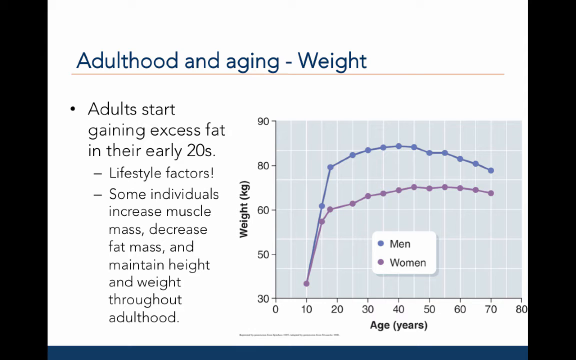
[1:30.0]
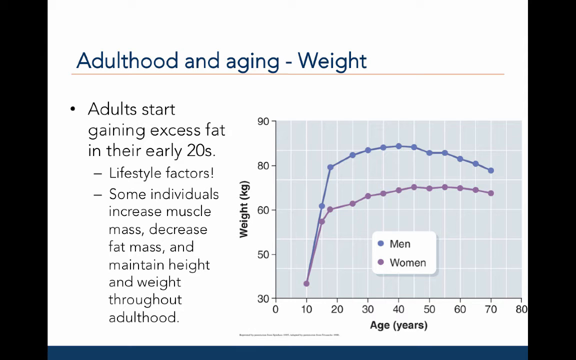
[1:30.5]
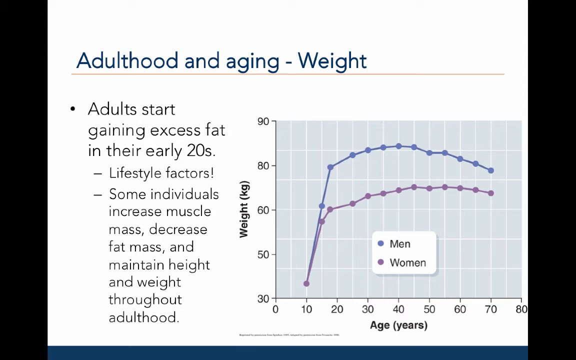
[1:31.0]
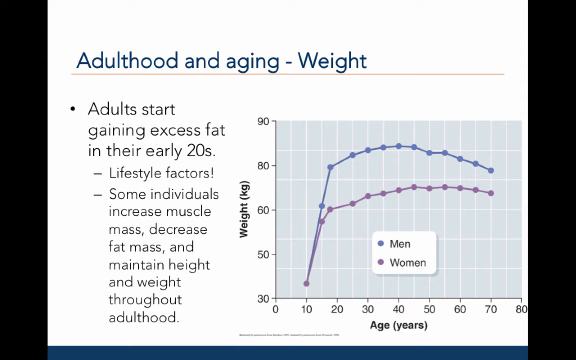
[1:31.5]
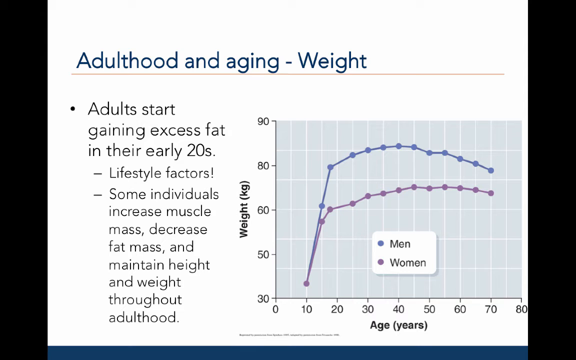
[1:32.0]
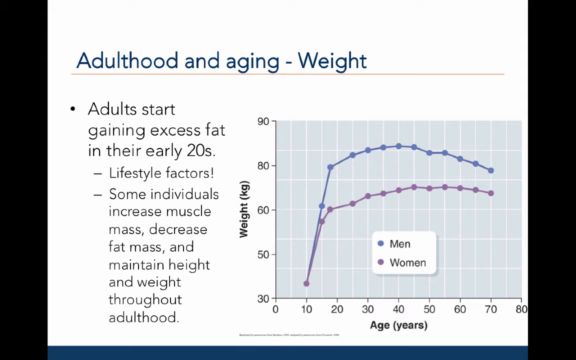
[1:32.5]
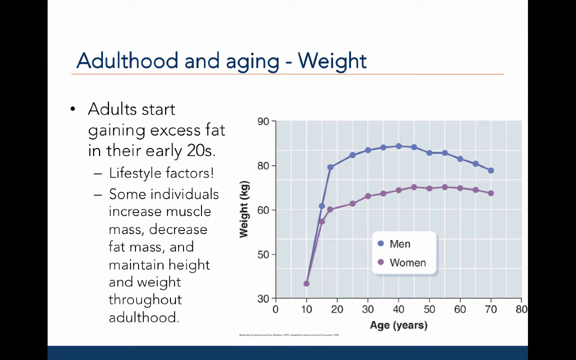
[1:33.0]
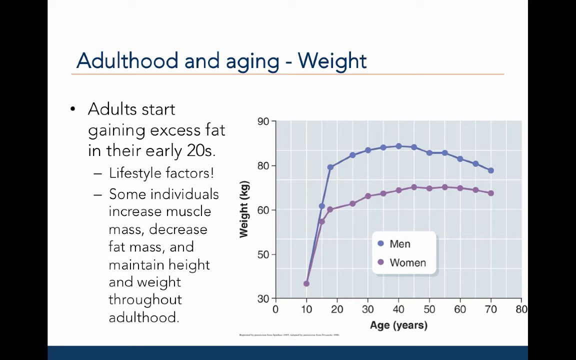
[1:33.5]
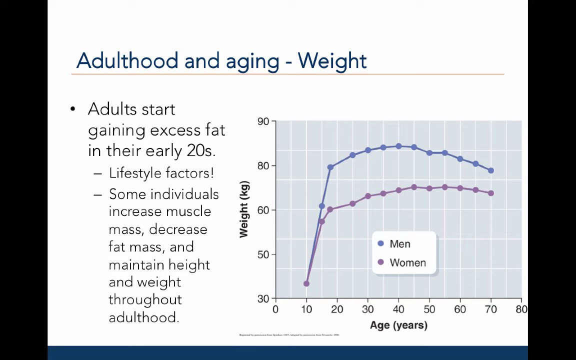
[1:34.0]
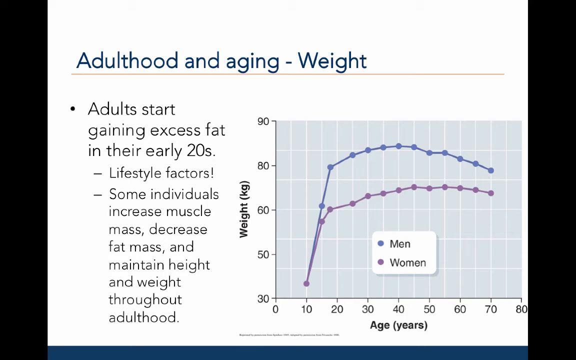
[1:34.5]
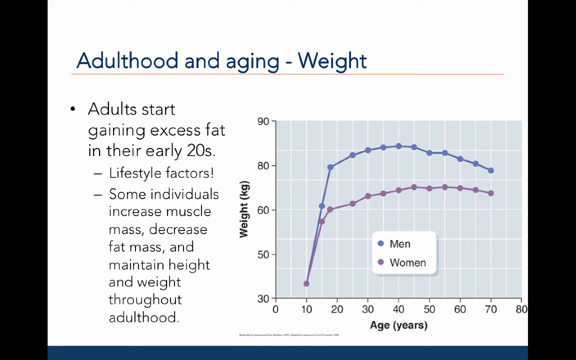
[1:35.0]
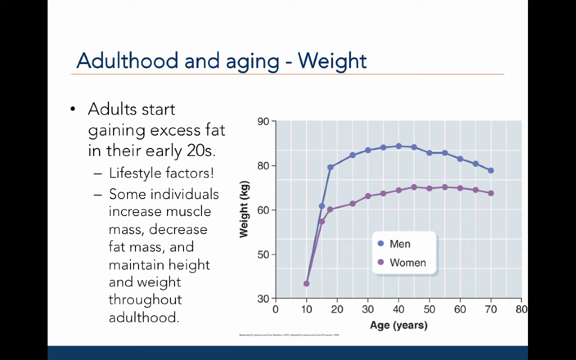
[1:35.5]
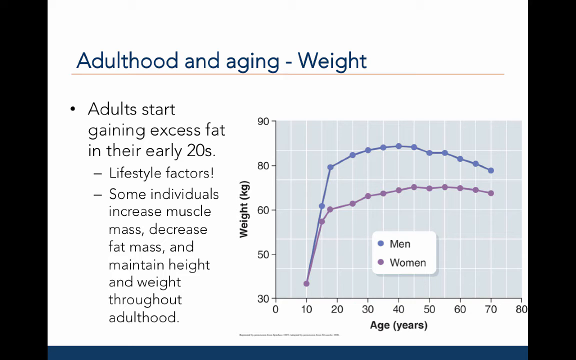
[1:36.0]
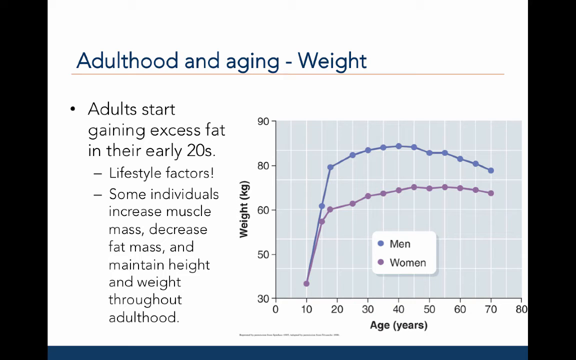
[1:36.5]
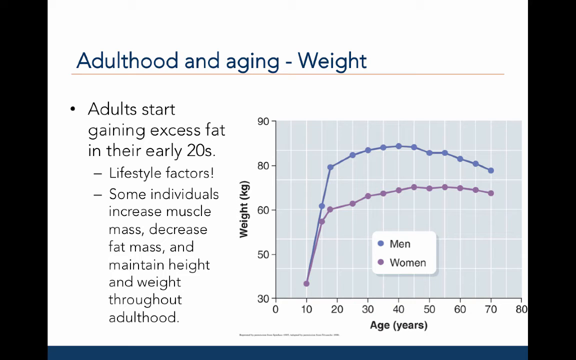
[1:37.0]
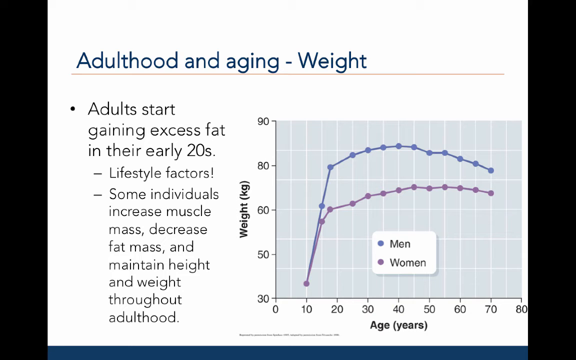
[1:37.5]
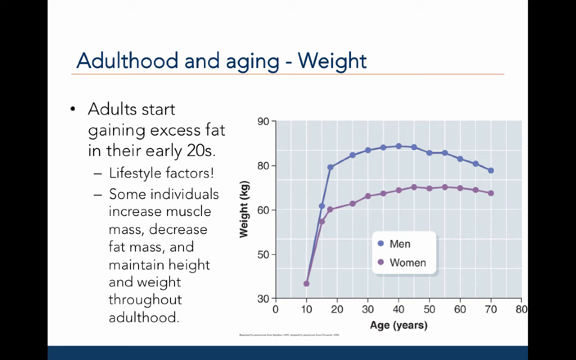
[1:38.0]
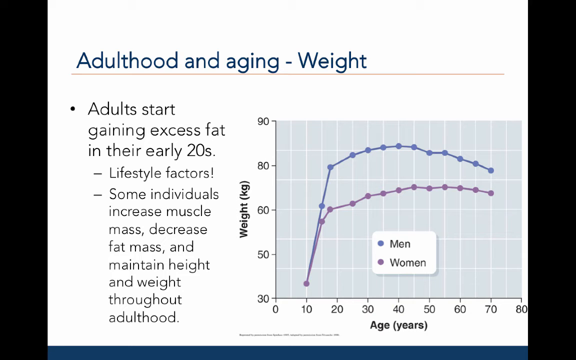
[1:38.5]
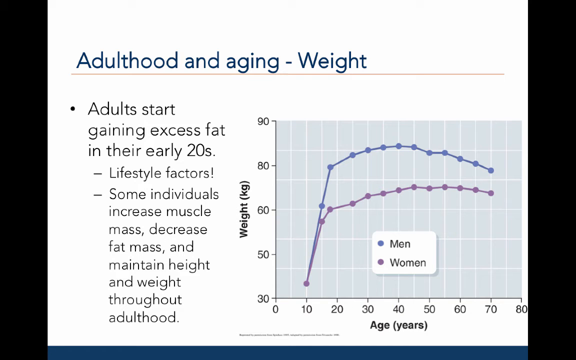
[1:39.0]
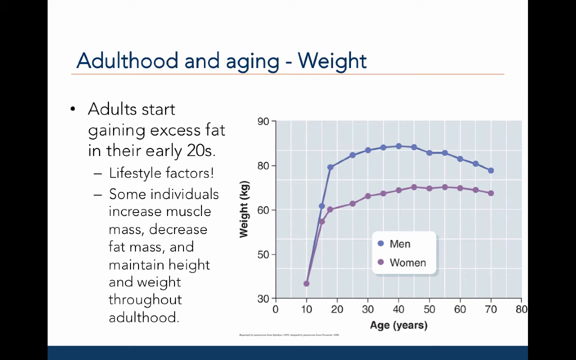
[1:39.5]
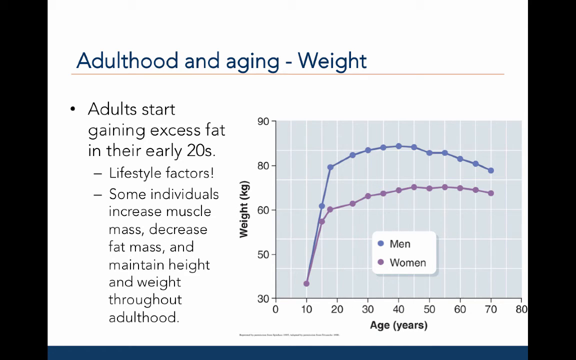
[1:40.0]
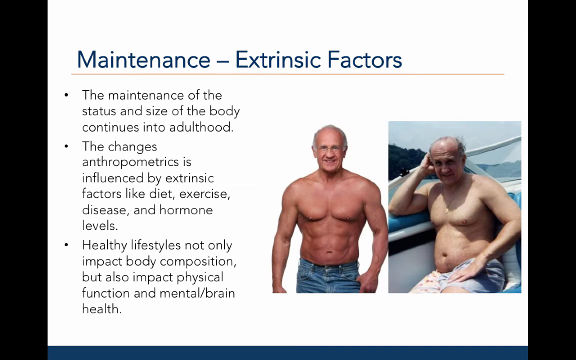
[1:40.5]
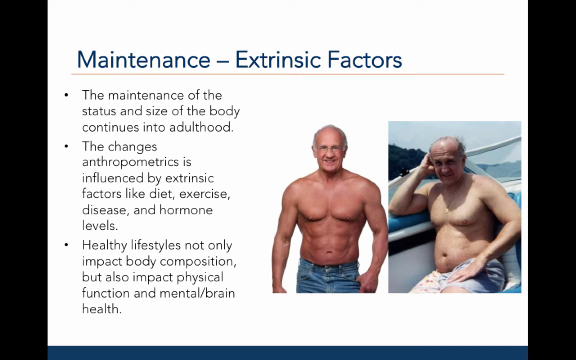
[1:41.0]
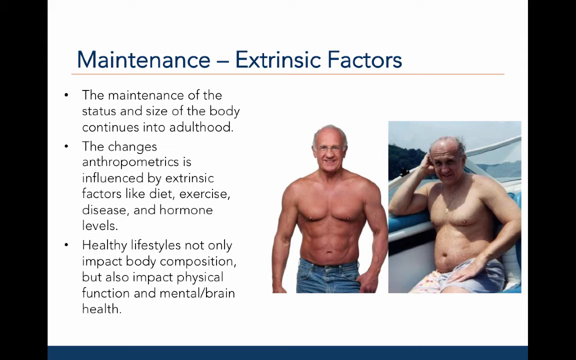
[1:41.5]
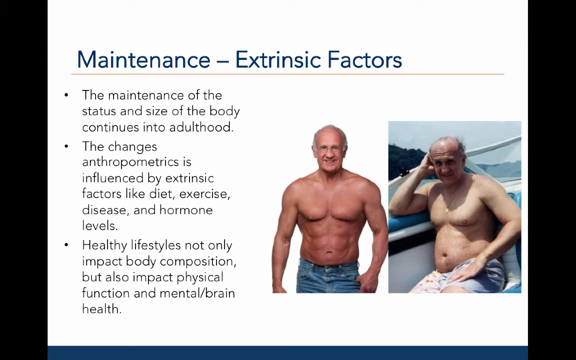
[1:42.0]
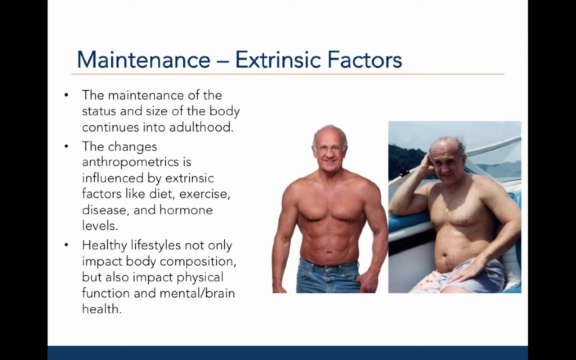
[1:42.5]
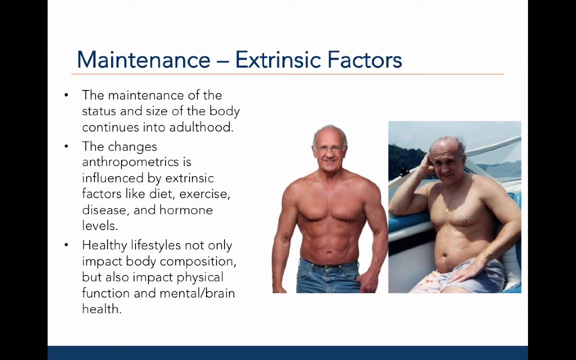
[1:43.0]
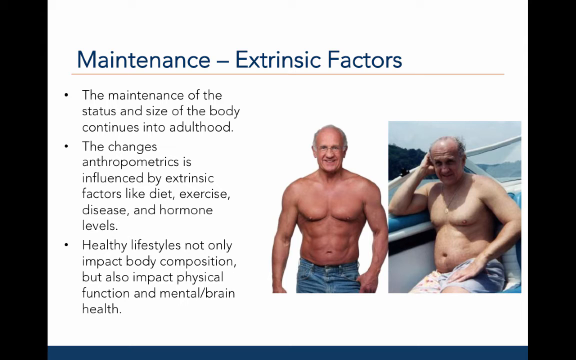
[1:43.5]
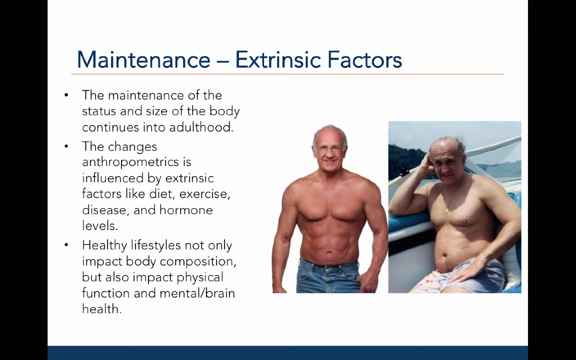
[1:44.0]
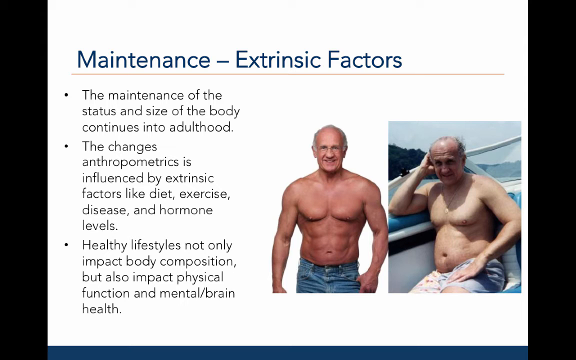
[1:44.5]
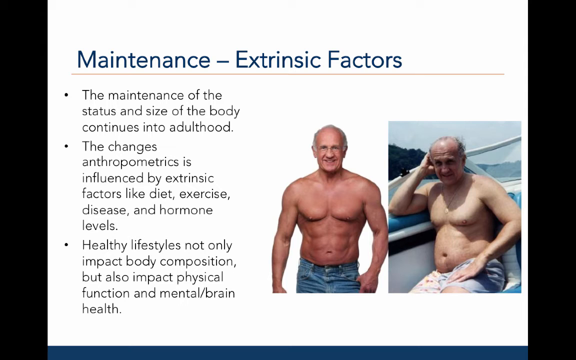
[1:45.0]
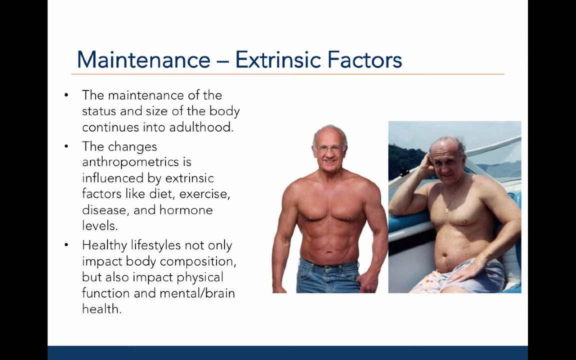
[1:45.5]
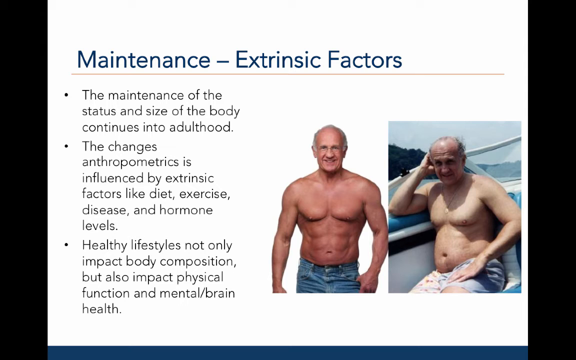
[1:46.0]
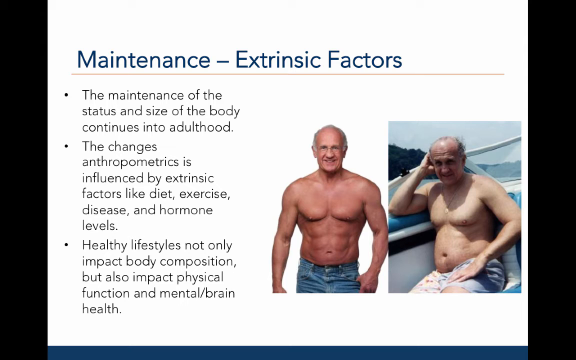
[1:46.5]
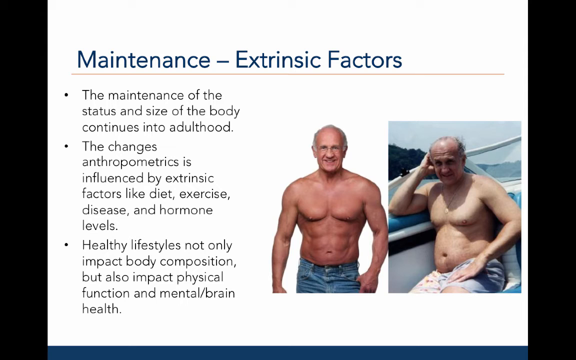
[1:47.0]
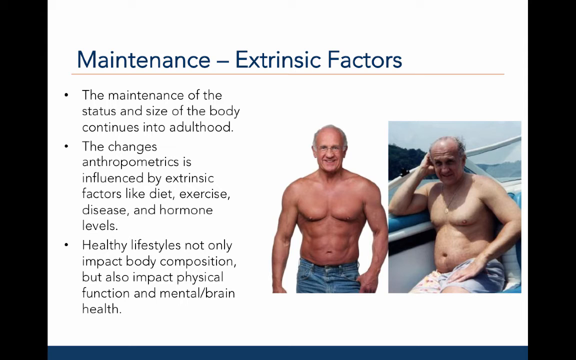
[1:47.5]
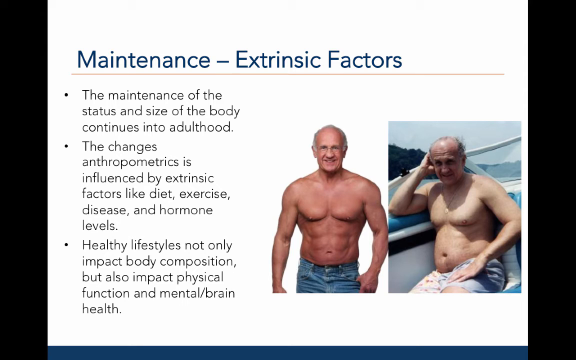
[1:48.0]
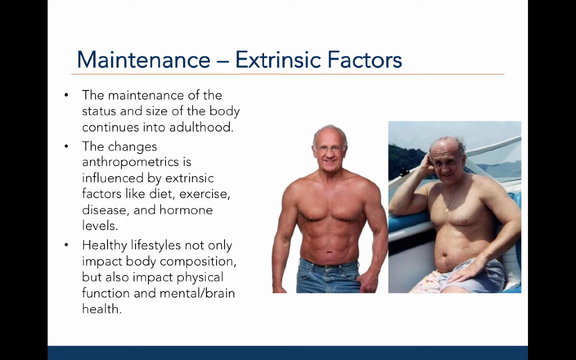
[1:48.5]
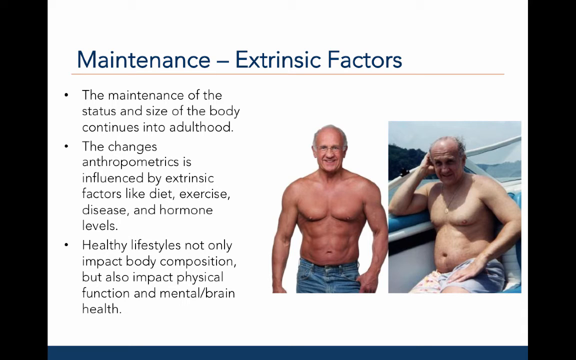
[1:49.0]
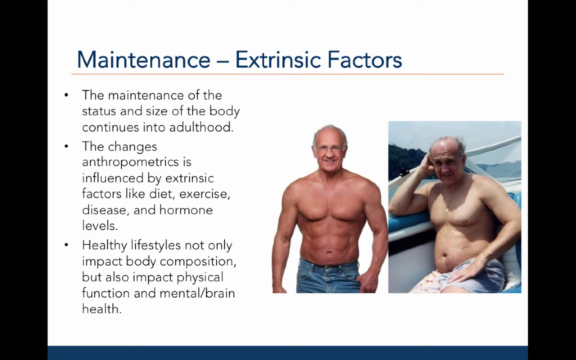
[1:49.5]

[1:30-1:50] The adulthood and aging weight slide states that adults start gaining excess fat in their early 20s, that common factors include lifestyle factors, and that some individuals increase muscle mass, decrease fat mass, and maintain height and weight throughout adulthood. A chart shows how men and women age, with age in years on the horizontal axis from 0 to 80 and weight in kg on the vertical axis from 30 to 90. The indicators, purple for women and blue for men, are labeled in bold, and the chart shows the weight they can attain at certain ages. The presentation then moves on to maintenance, under extrinsic factors.